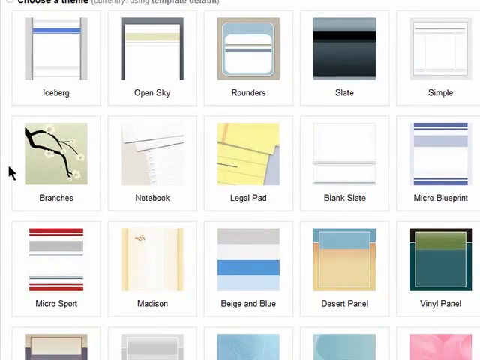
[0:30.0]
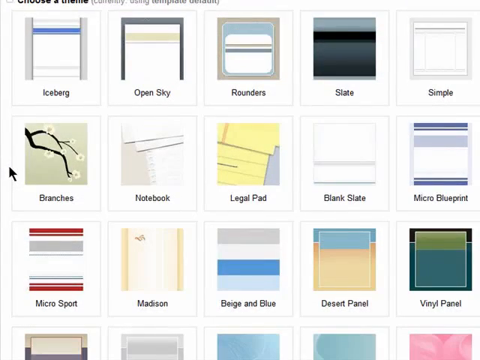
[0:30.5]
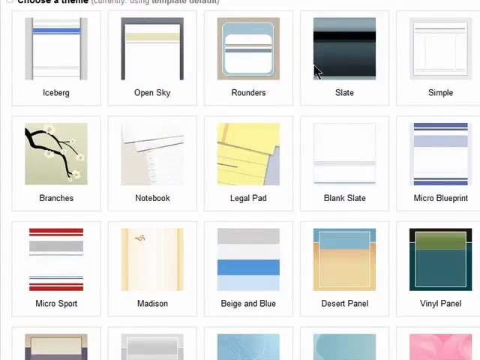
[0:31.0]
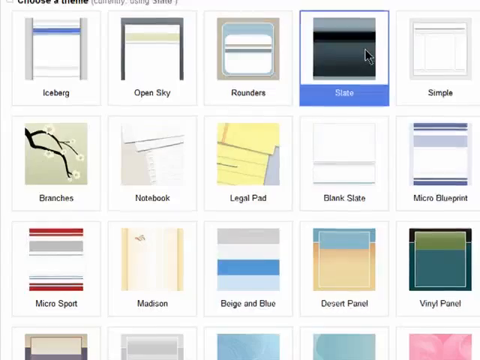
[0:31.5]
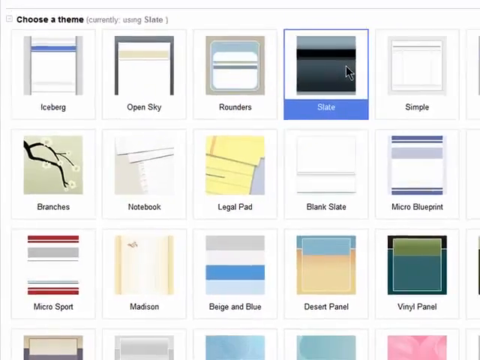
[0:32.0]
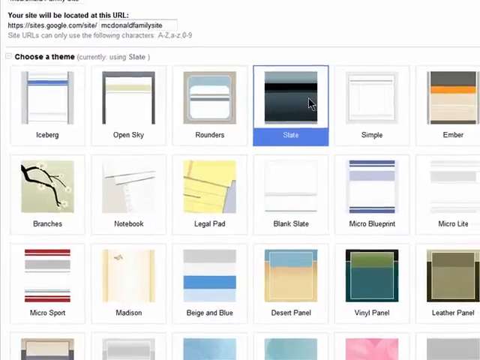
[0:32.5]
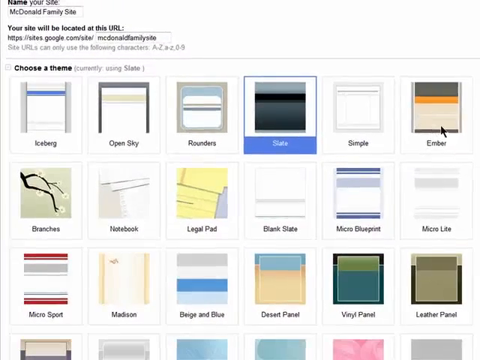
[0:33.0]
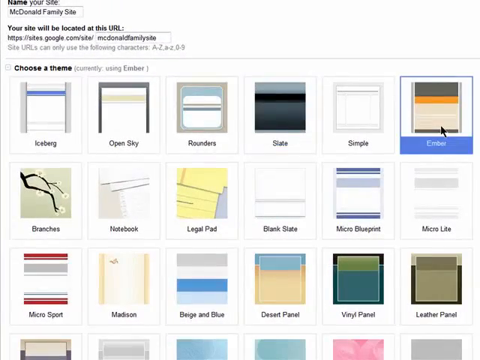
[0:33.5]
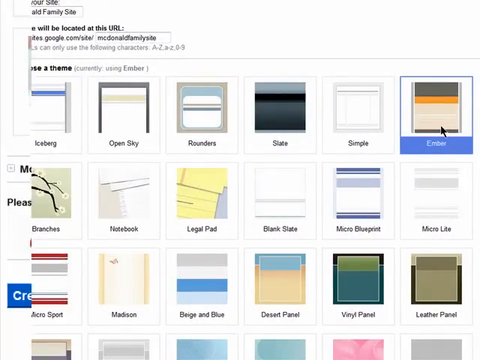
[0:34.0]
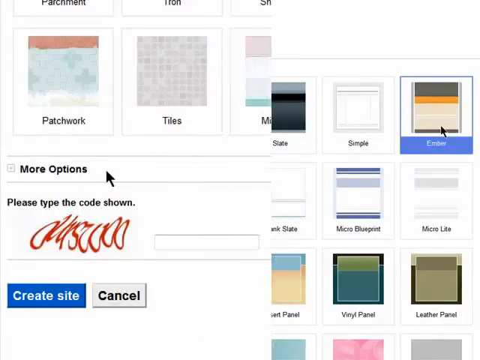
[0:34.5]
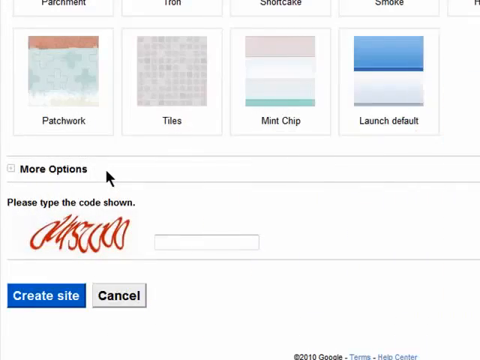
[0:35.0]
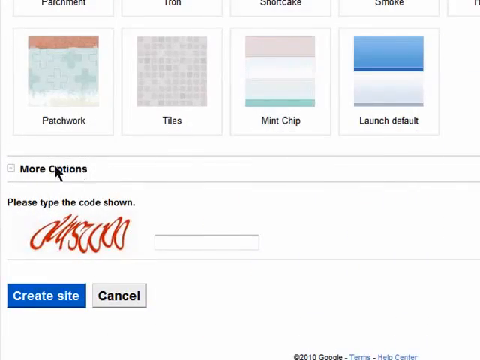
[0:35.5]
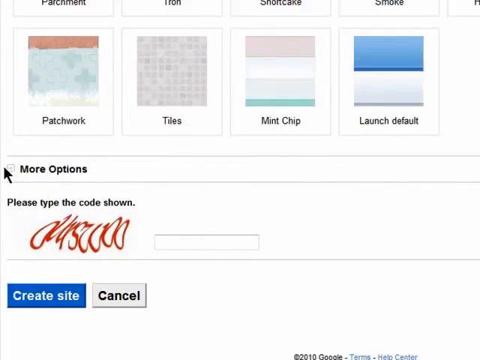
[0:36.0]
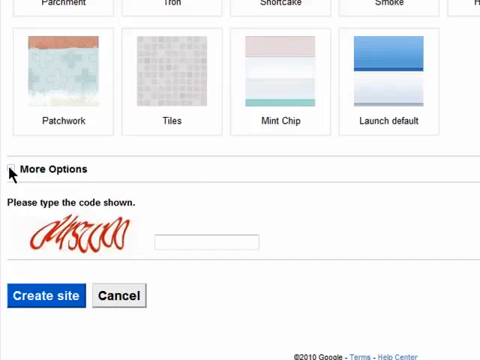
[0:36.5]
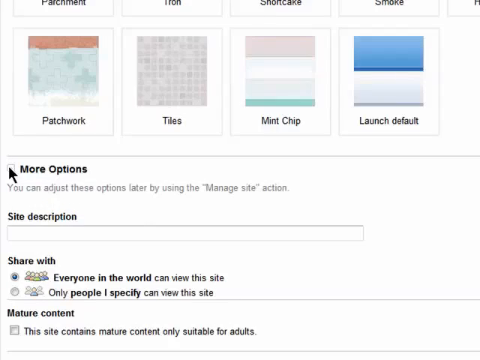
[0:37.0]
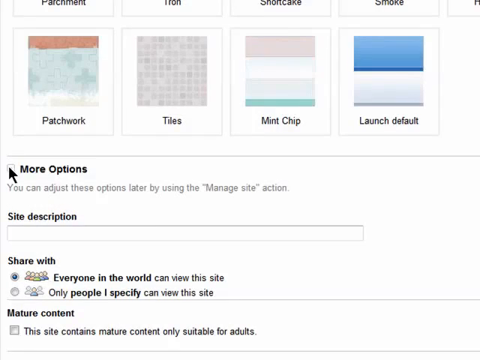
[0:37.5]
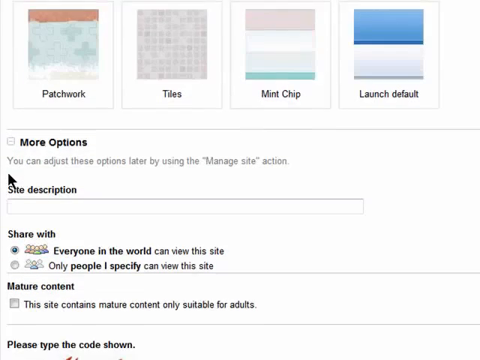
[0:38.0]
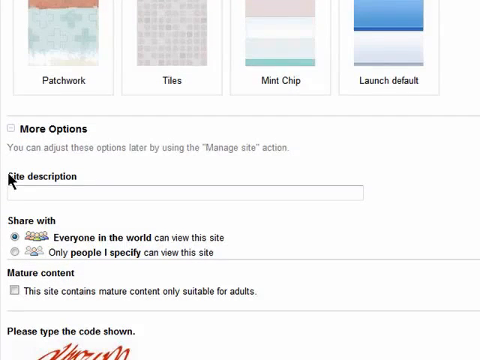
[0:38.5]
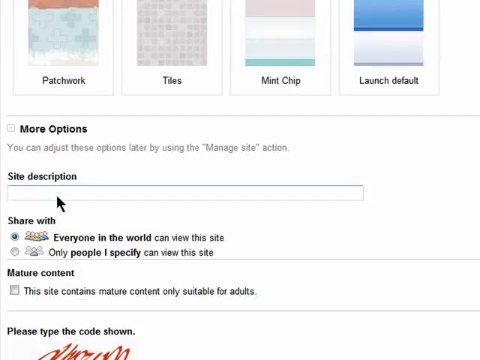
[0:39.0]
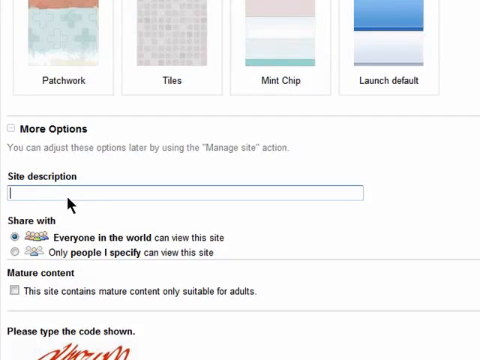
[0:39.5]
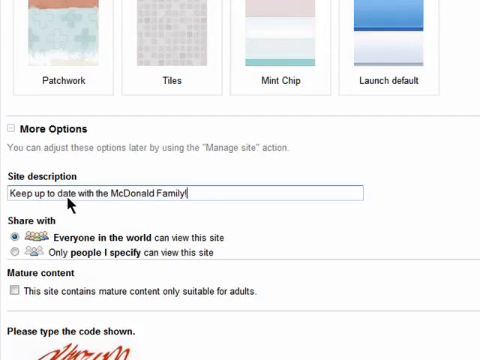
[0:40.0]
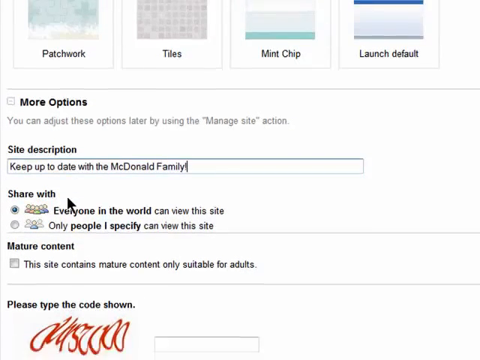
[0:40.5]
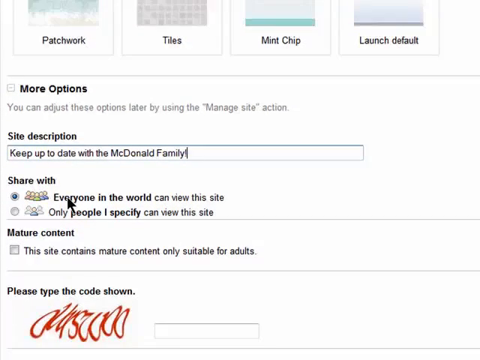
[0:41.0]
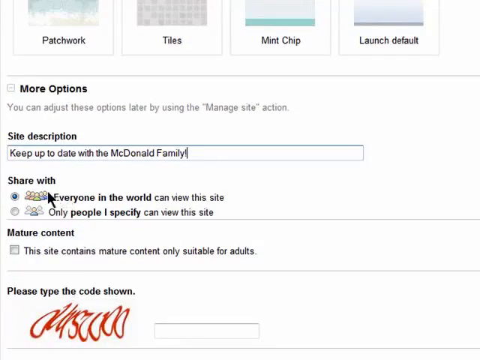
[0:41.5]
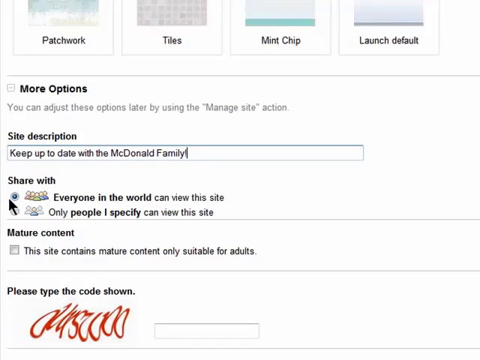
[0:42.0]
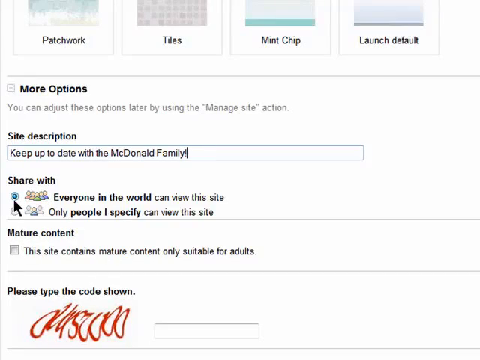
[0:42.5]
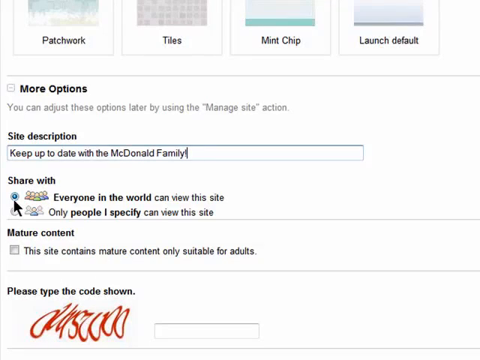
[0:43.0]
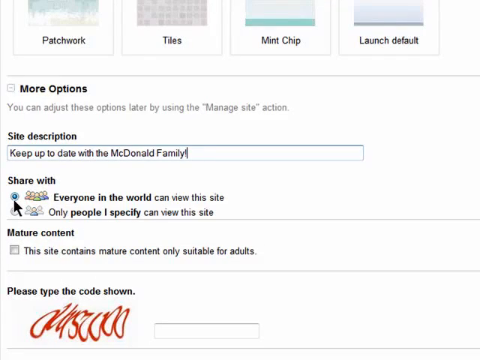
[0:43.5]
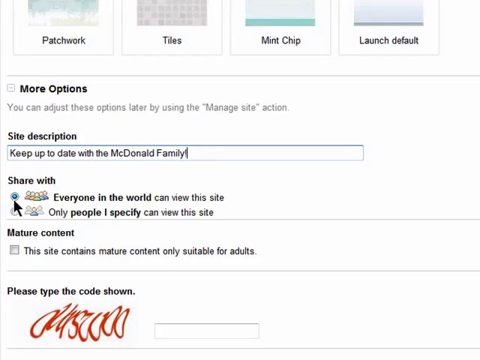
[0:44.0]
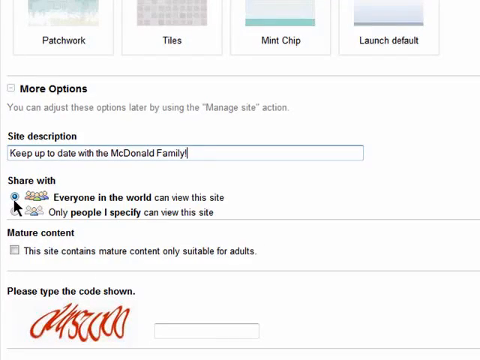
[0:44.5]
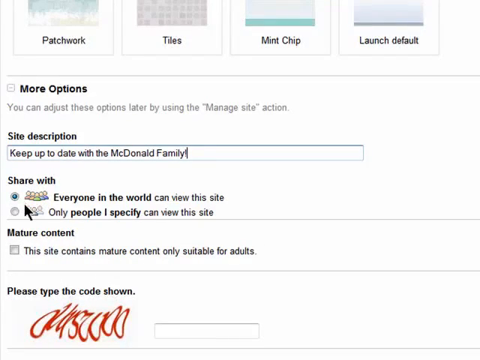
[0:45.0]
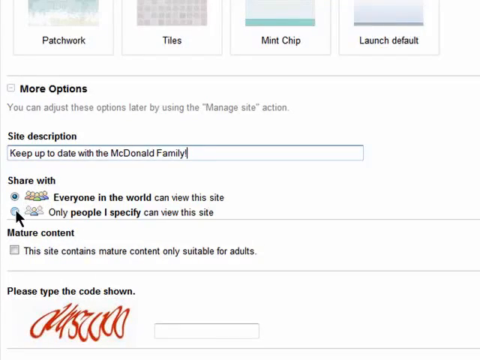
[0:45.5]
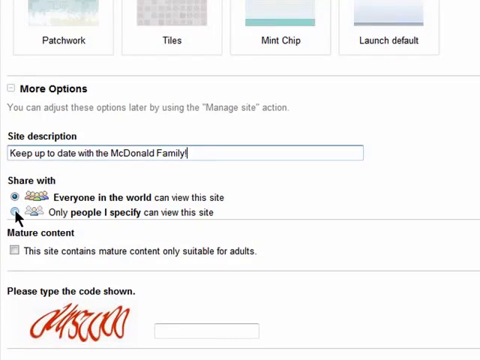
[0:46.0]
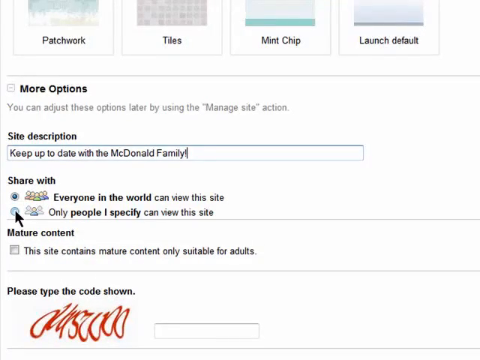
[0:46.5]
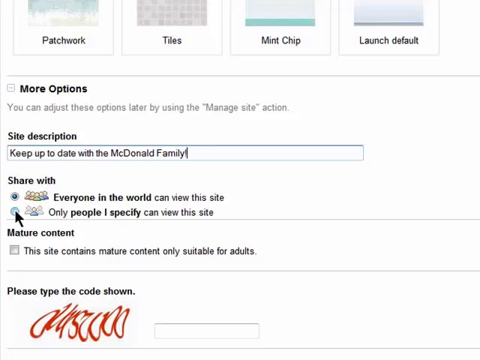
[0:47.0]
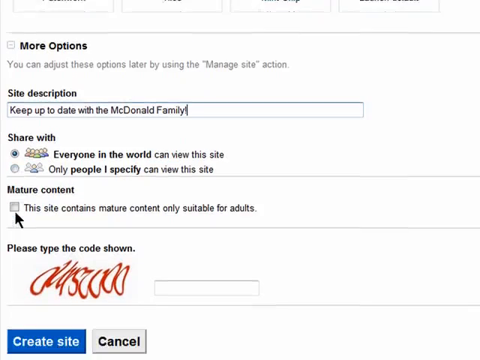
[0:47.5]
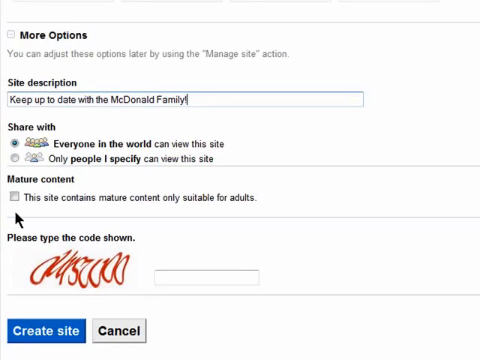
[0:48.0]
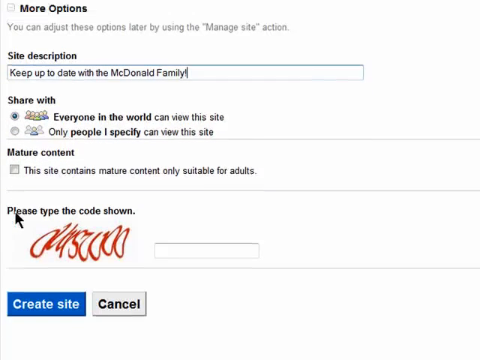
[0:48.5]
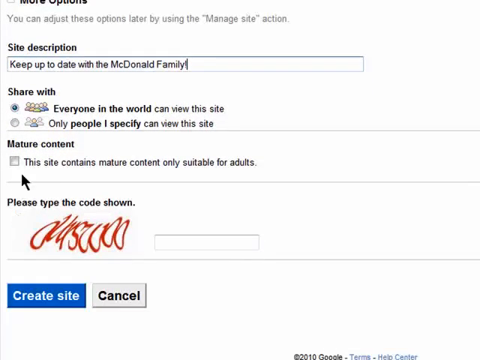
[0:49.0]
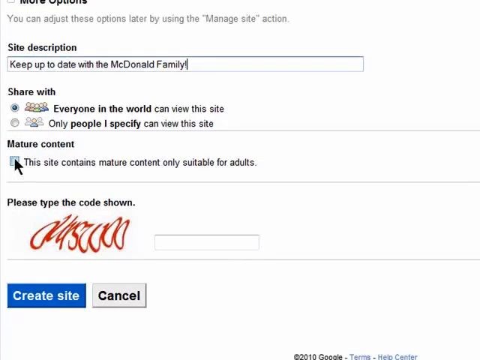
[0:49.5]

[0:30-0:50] A series of templates appears in three rows: "iceberg, open sky, rounders, slate, symbol, branches, notebook, legal pad, blank slate, micro blueprint, micro sport, Madison, beige and blue, desert panel, vinyl panel." They all have different designs, and most of them have more than one color. The cursor clicks the more options button, which brings up more information; the site description reads "keep up to date with the McDonald family." Under a share-with option, the selected choice is "everyone in the world can view the site," so the site seems to be shareable with everyone. The other, unselected option, "only people I can specify can view this site," is briefly passed over with the cursor. The page scrolls down a little to the mature content option, and the cursor hovers over its empty square.